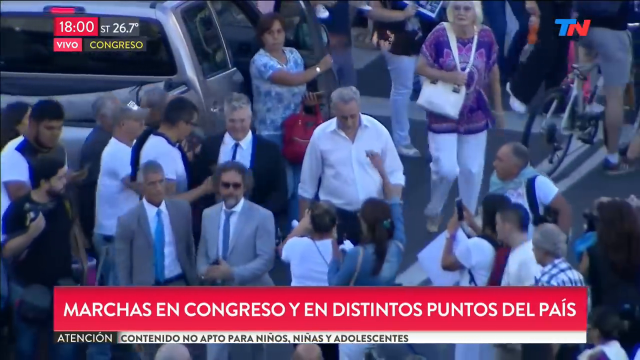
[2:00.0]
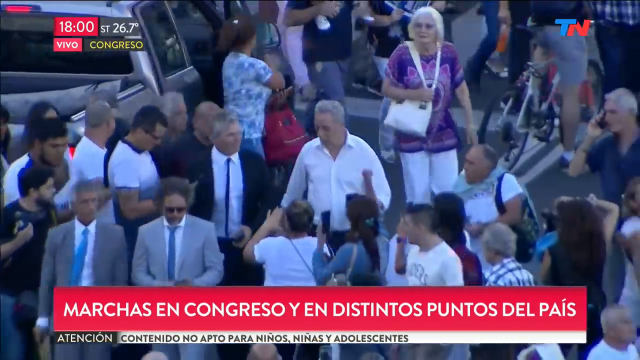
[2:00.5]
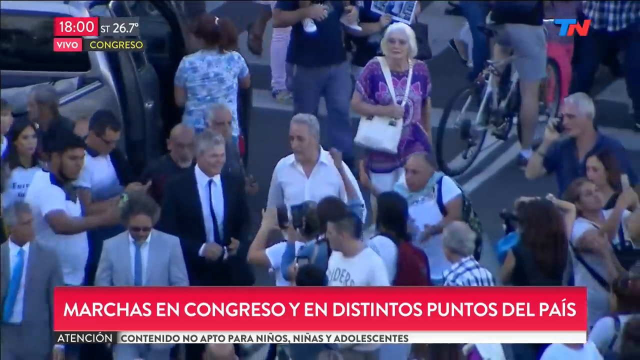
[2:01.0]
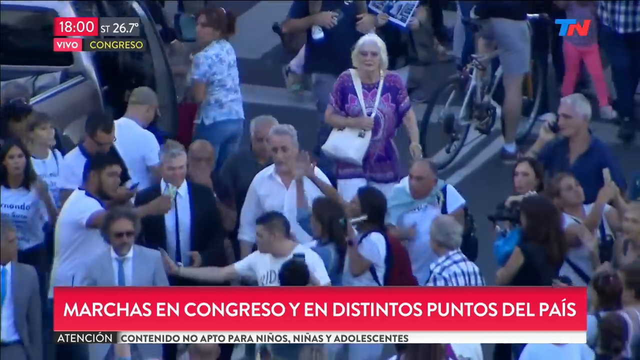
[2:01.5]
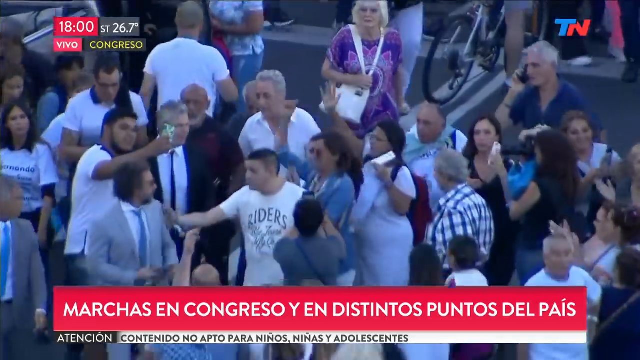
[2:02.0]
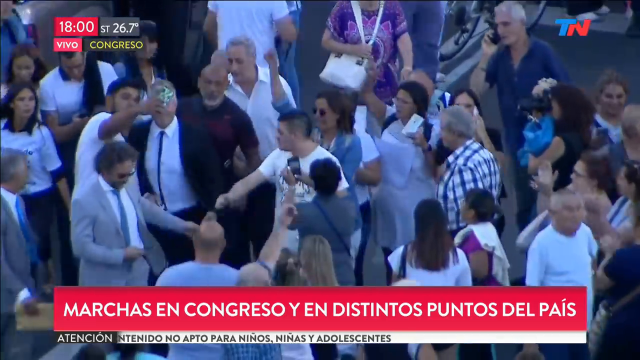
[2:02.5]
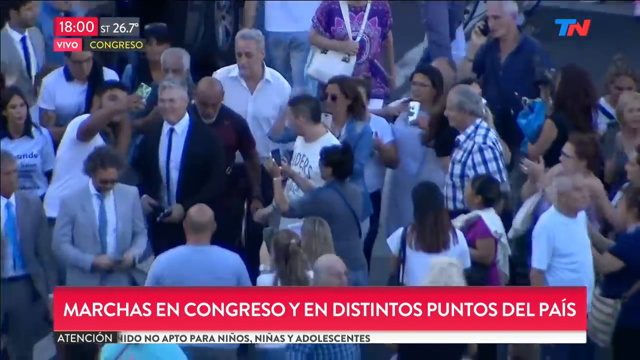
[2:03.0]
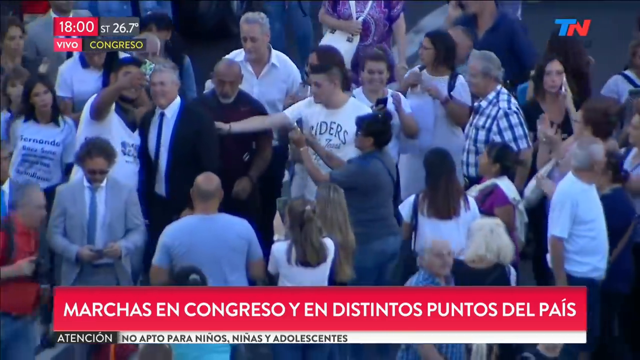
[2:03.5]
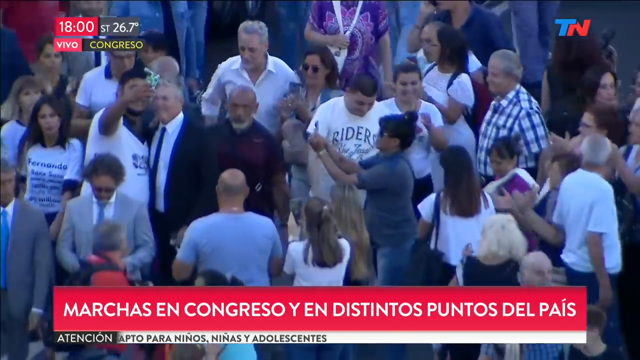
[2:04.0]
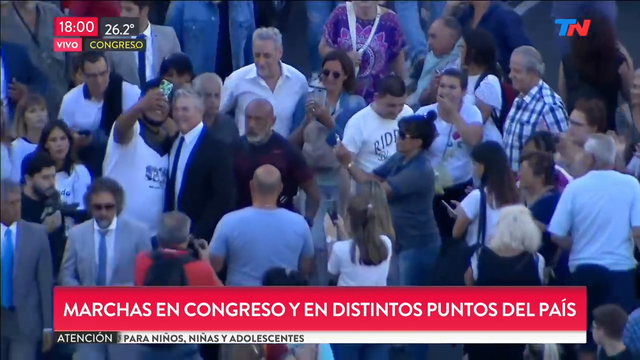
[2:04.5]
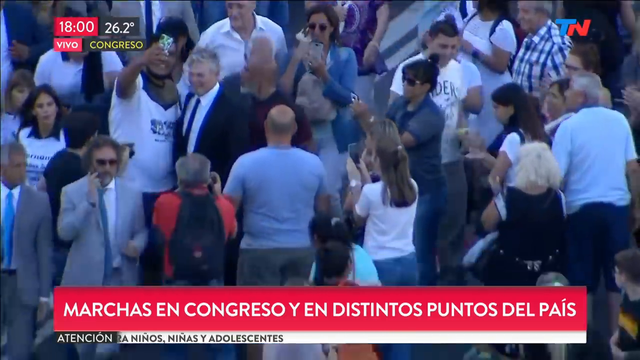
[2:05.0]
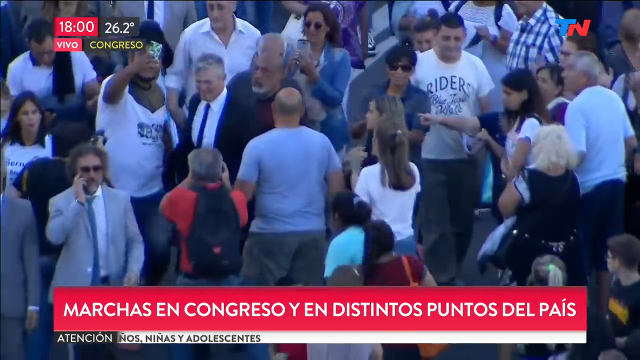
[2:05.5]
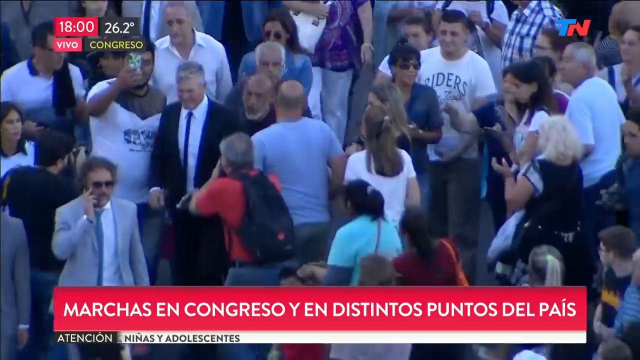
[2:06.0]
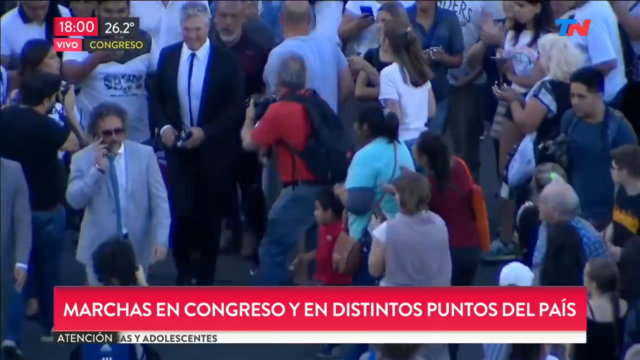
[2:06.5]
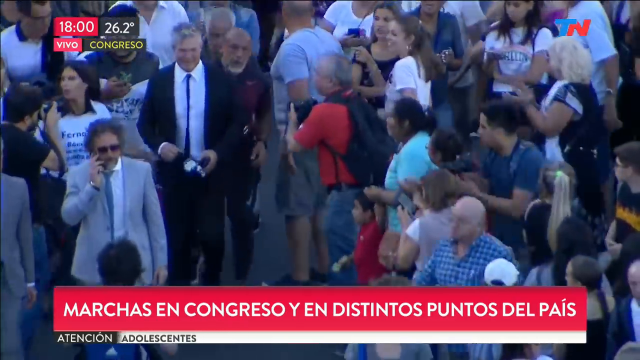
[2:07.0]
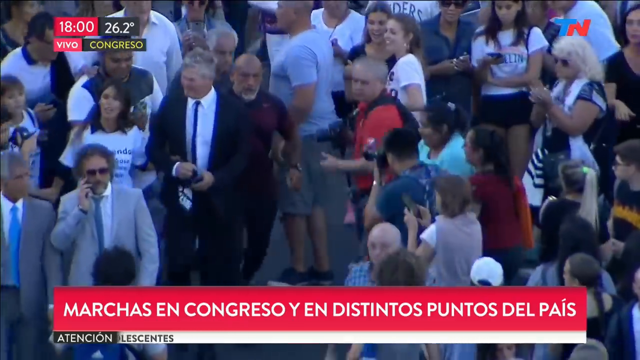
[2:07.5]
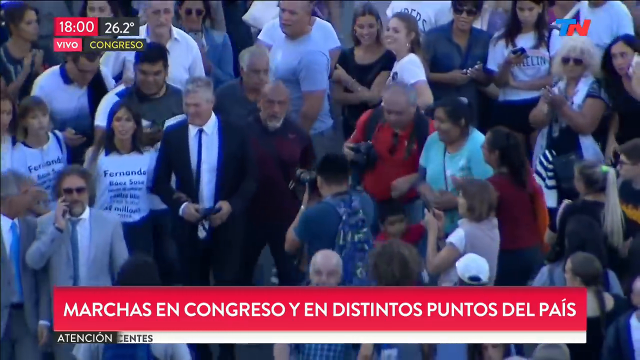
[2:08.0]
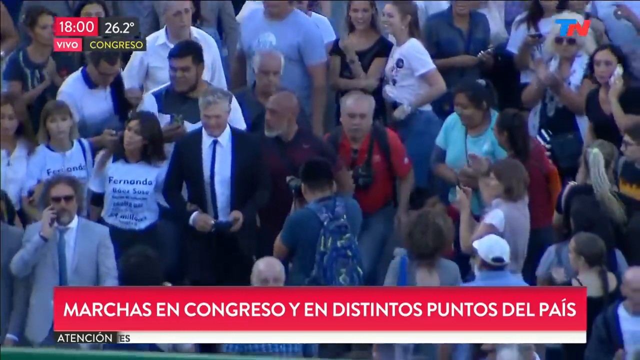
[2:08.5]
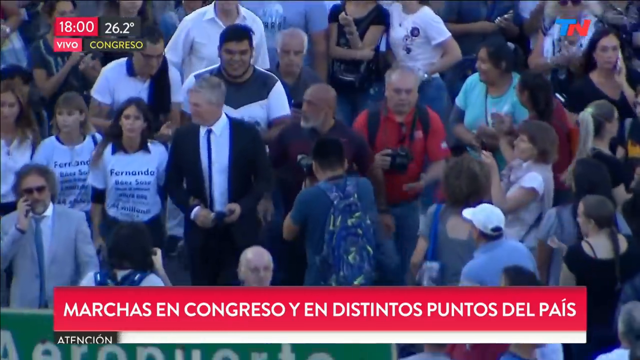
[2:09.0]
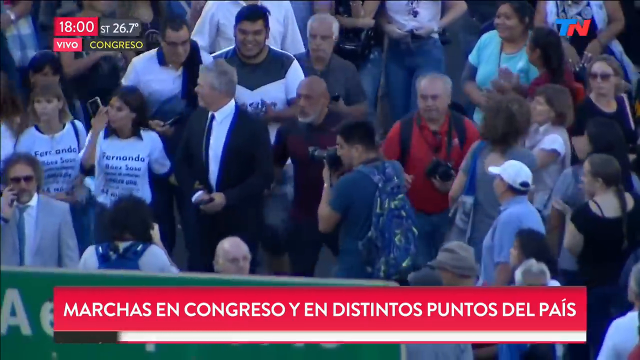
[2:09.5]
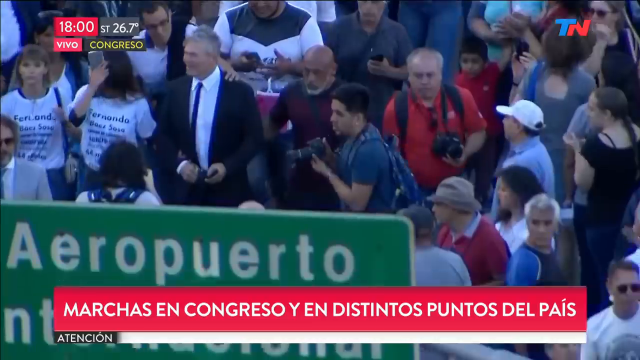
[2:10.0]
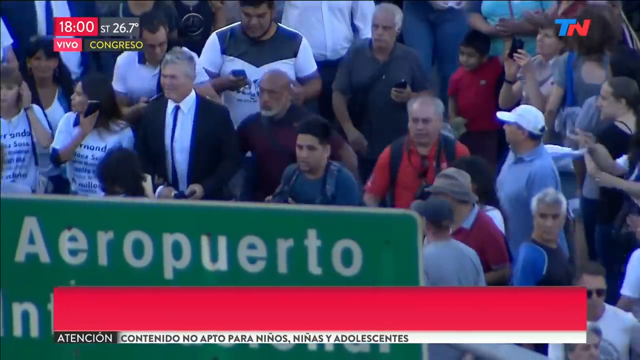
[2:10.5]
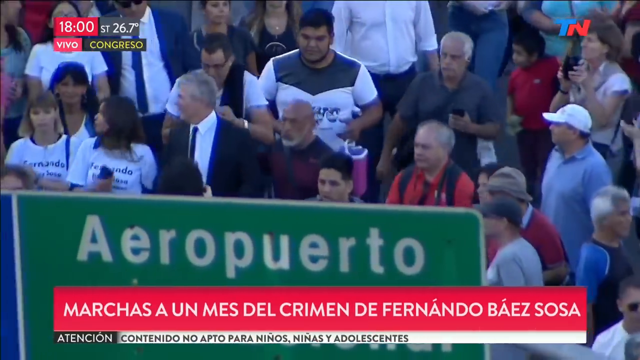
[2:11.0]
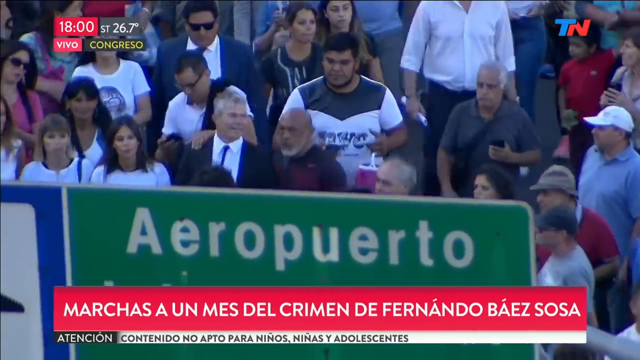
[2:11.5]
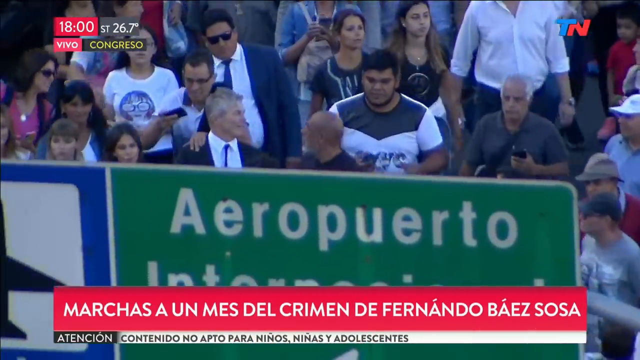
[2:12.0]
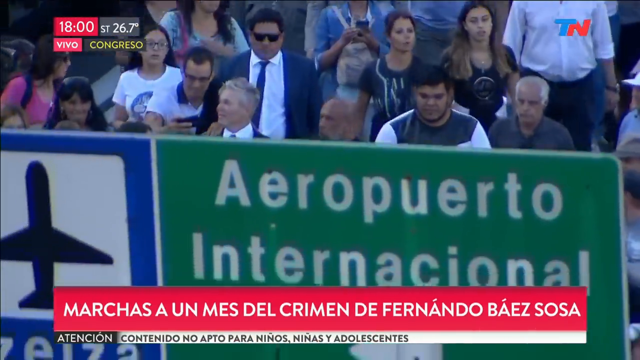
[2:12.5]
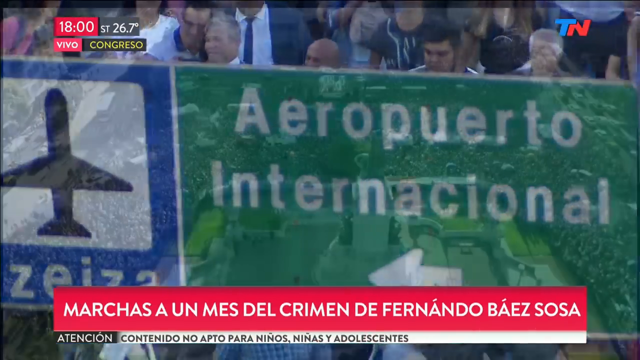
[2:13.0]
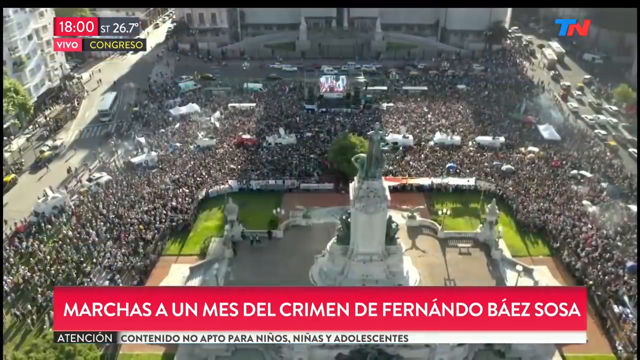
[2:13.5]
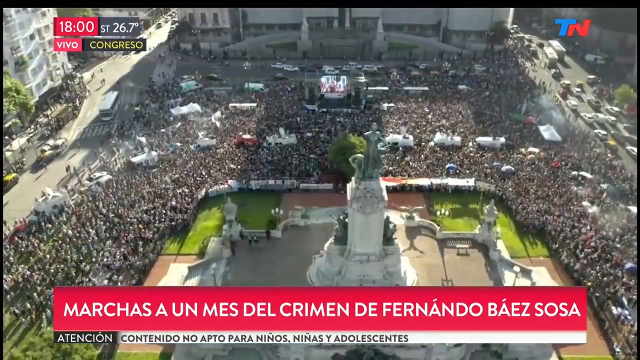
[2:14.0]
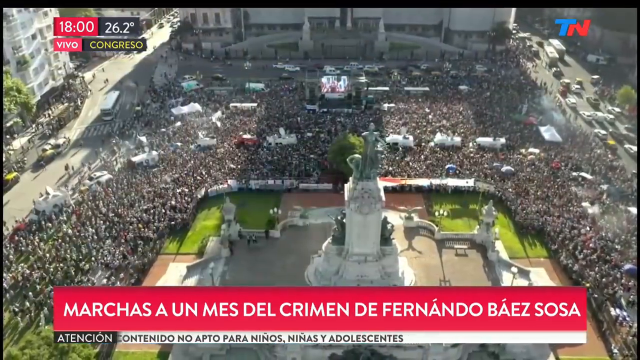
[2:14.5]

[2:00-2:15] A man in a black suit, a white shirt, and a black tie walks through a very dense crowd, many of whom hold up phones and cameras; one man walking beside him holds up his camera as if to take a selfie. The suited man smiles as he walks, followed by people who appear close to him and by a large crowd that seems to follow him to his destination. He walks toward the camera, which looks down from an overhead view. The shot then changes to a zoomed-out view of a blocked-off street in a large city, completely packed with people, with huge buildings in the background and a street crowded with cars on the right side. White text in a red rectangle at the bottom reads "MARCHAS A UN MES DEL CRIMEN DE FERNANDO BAEZ SOSA", with a blue and red TN logo in the lower right corner beside it.